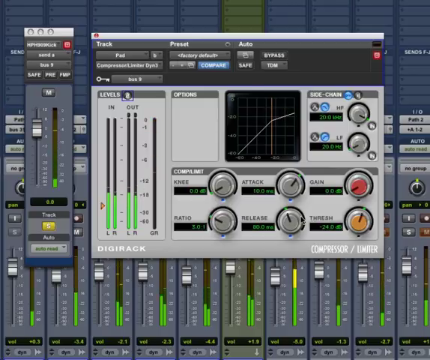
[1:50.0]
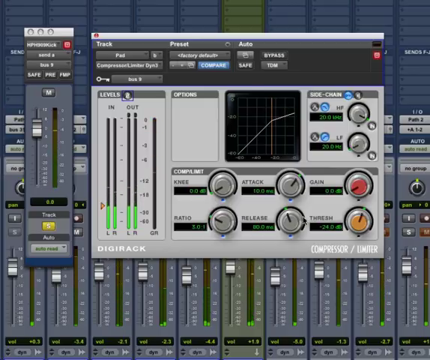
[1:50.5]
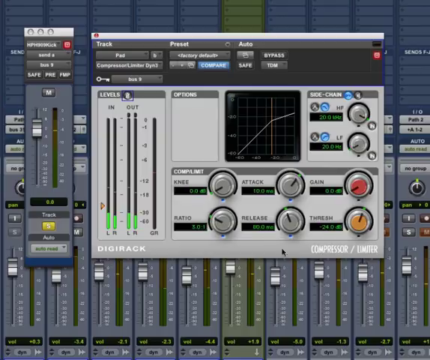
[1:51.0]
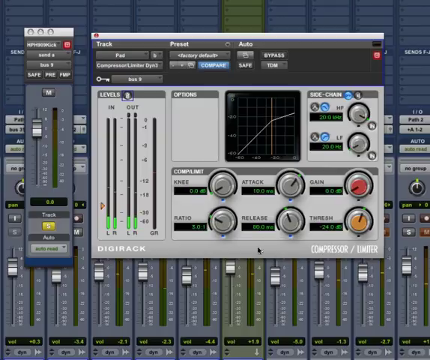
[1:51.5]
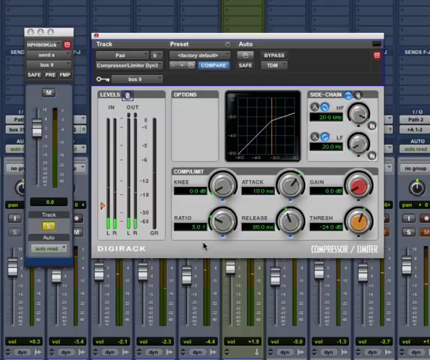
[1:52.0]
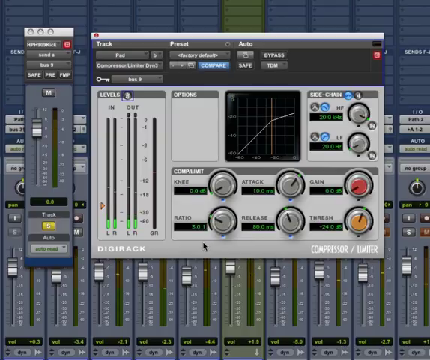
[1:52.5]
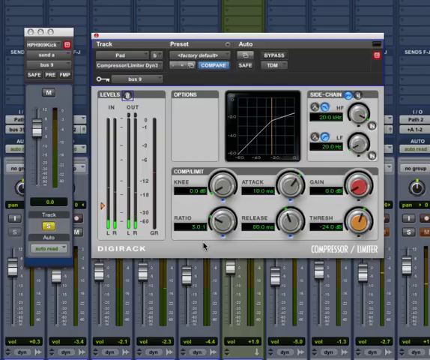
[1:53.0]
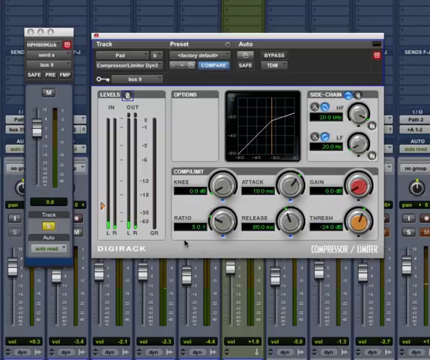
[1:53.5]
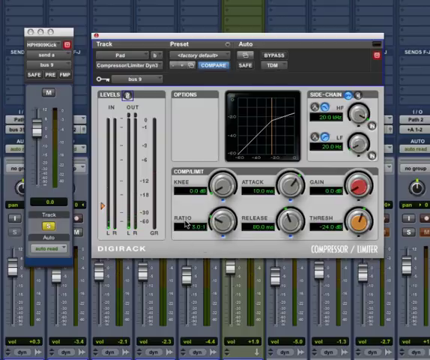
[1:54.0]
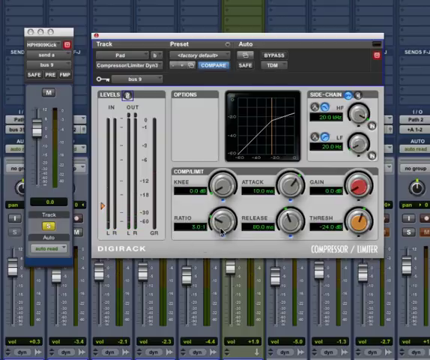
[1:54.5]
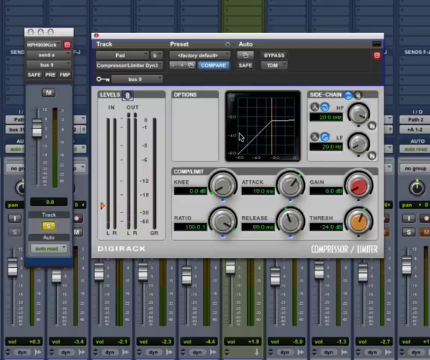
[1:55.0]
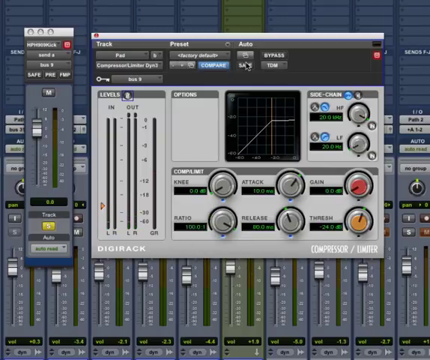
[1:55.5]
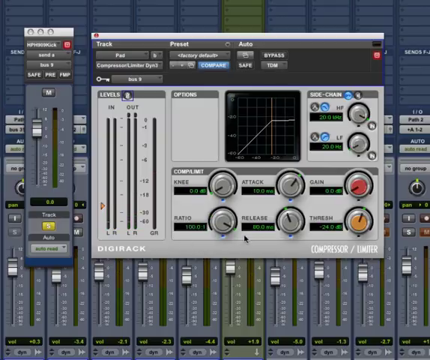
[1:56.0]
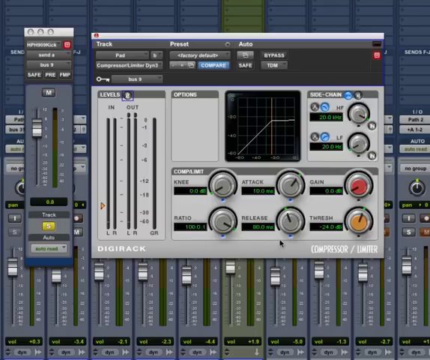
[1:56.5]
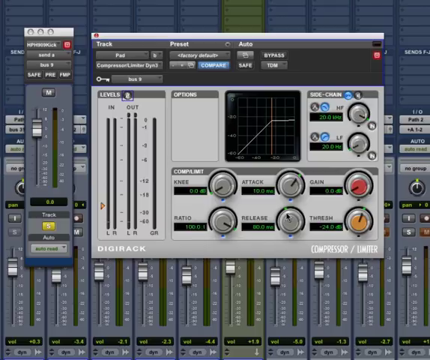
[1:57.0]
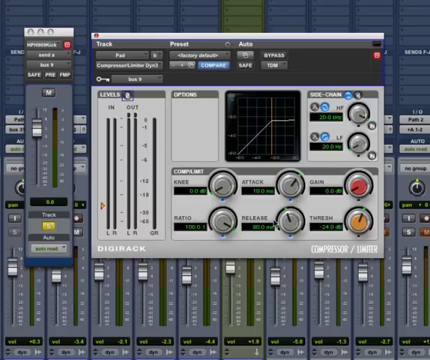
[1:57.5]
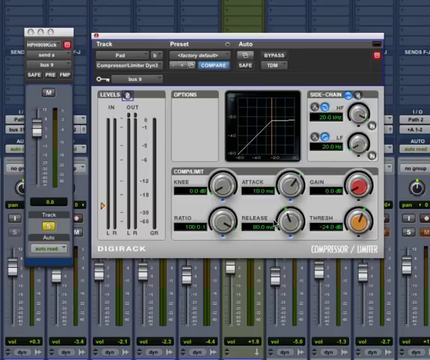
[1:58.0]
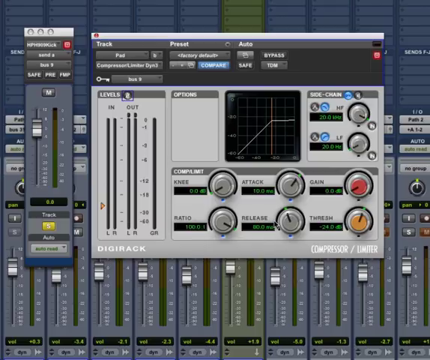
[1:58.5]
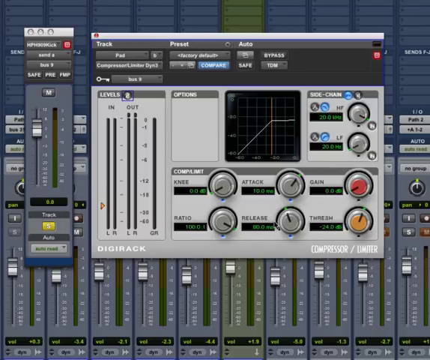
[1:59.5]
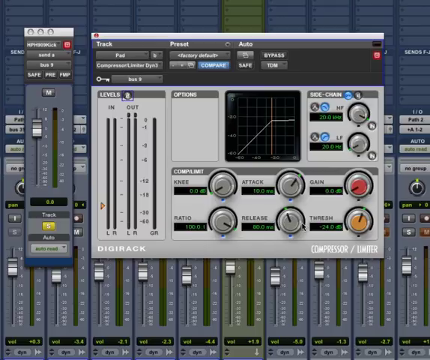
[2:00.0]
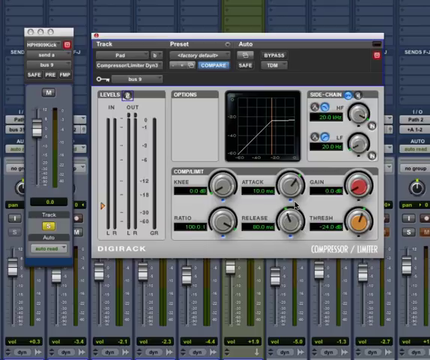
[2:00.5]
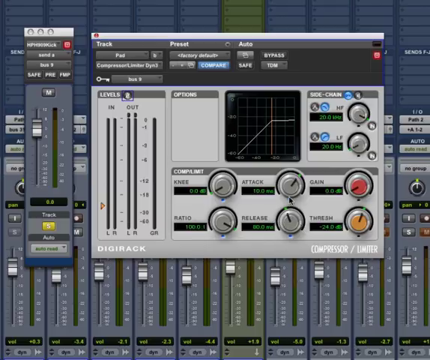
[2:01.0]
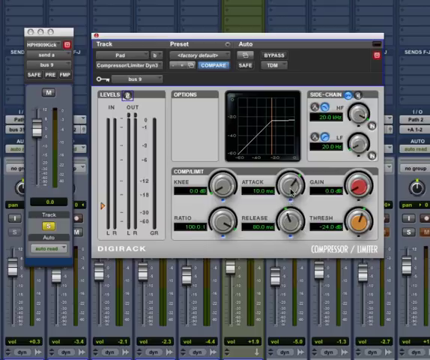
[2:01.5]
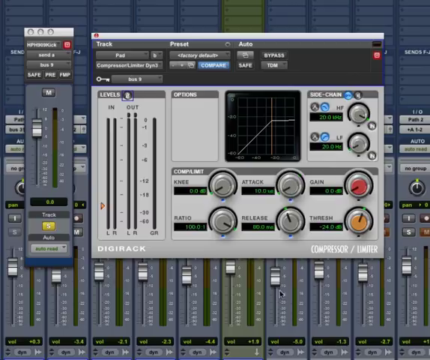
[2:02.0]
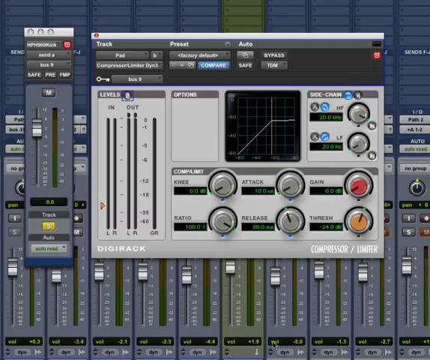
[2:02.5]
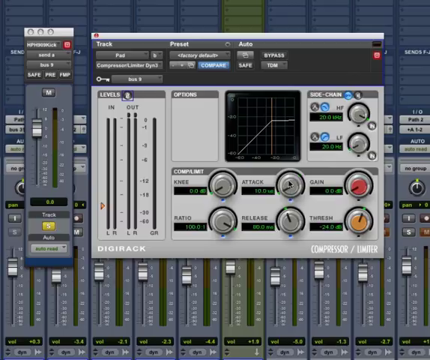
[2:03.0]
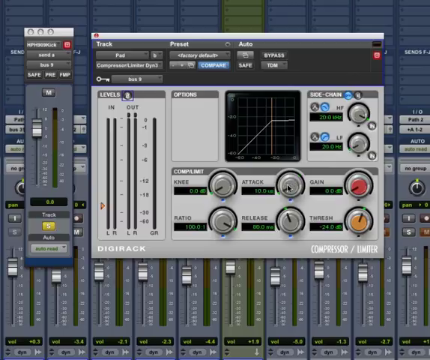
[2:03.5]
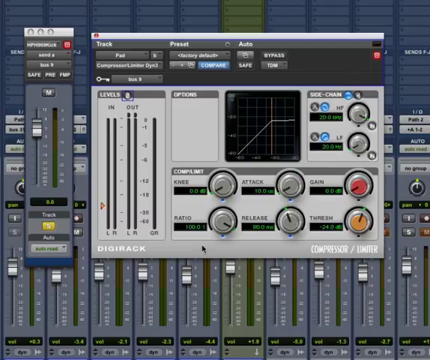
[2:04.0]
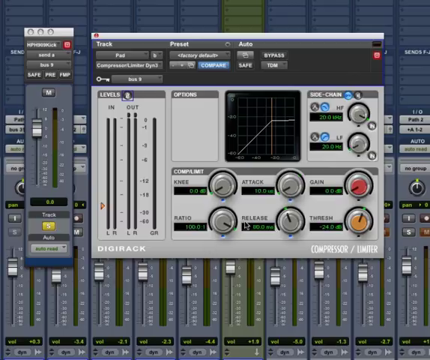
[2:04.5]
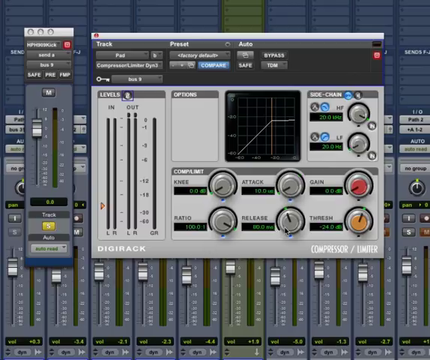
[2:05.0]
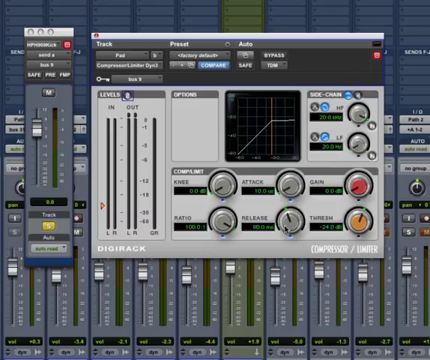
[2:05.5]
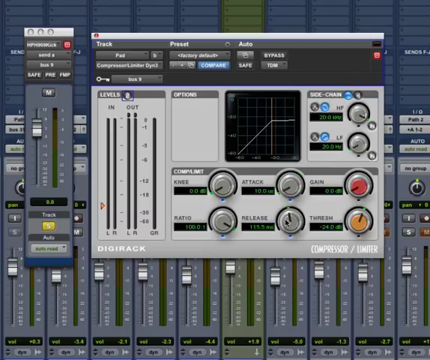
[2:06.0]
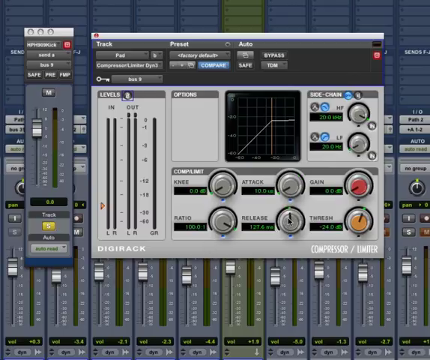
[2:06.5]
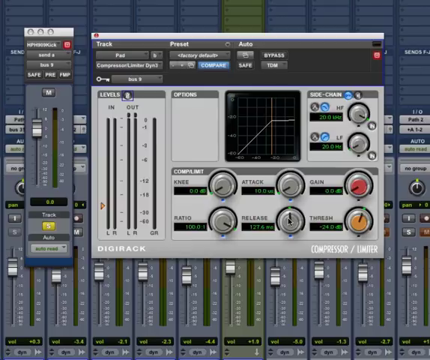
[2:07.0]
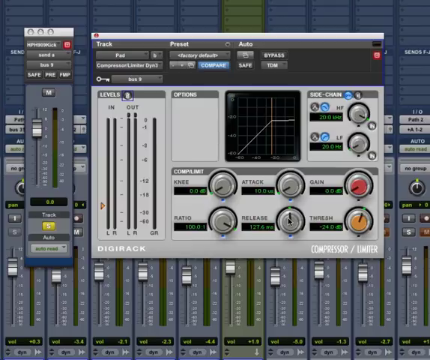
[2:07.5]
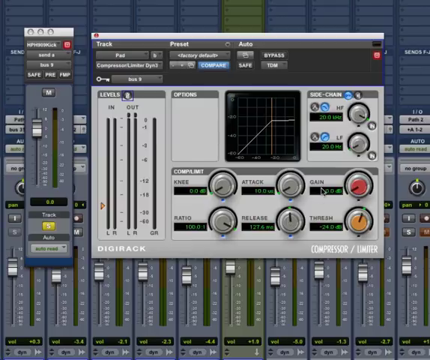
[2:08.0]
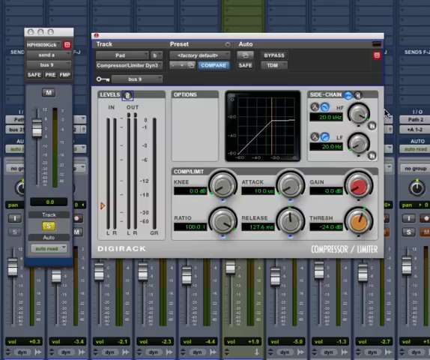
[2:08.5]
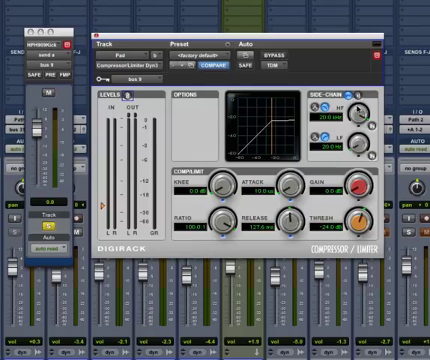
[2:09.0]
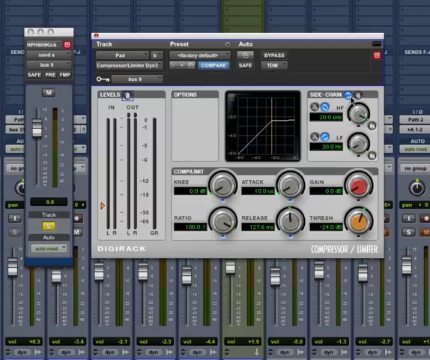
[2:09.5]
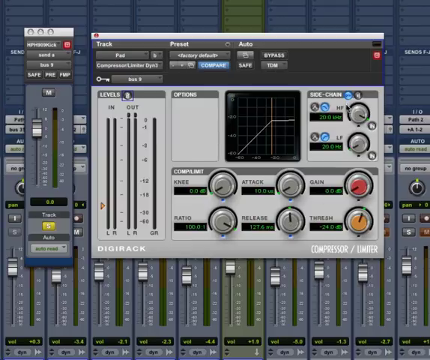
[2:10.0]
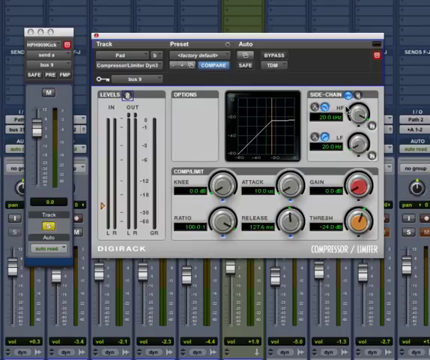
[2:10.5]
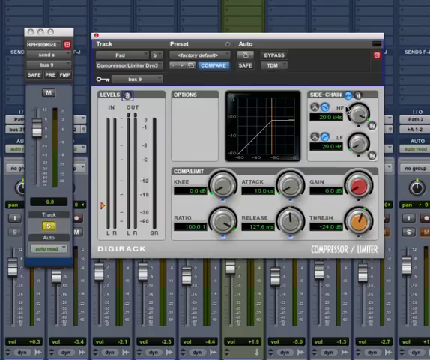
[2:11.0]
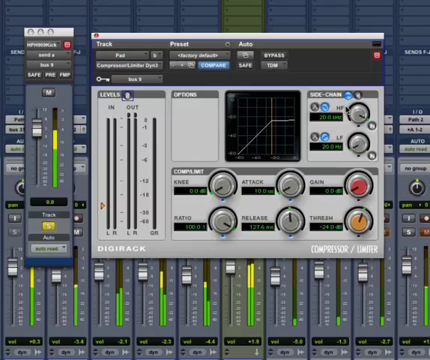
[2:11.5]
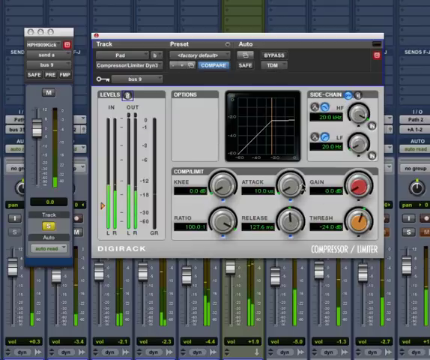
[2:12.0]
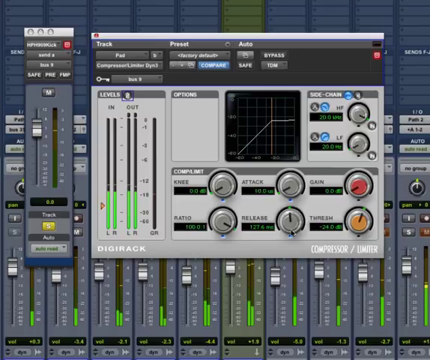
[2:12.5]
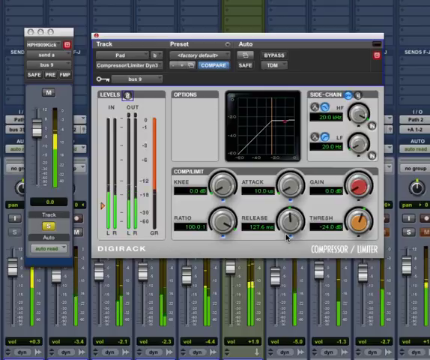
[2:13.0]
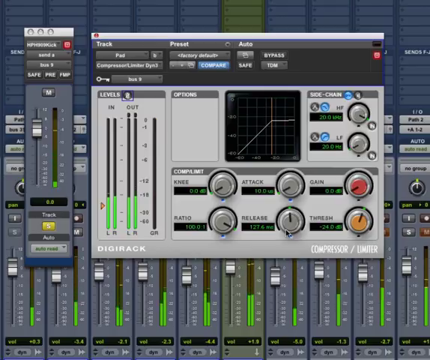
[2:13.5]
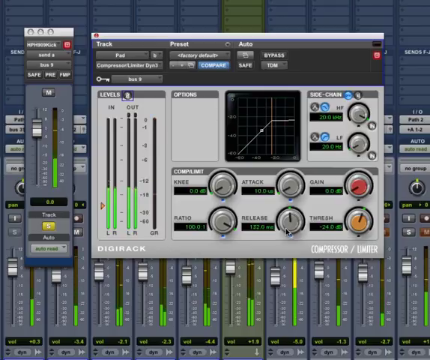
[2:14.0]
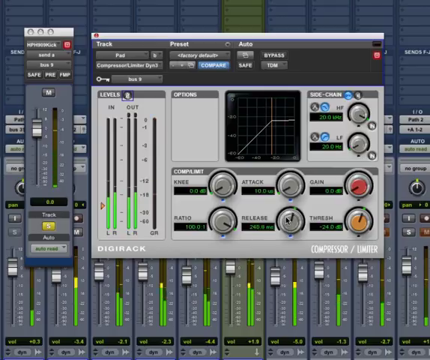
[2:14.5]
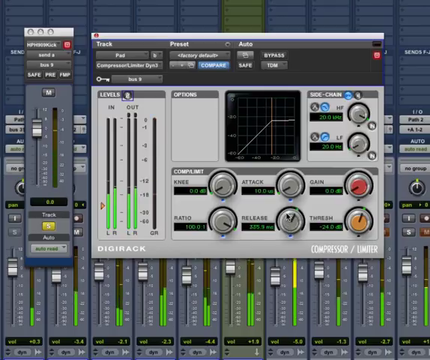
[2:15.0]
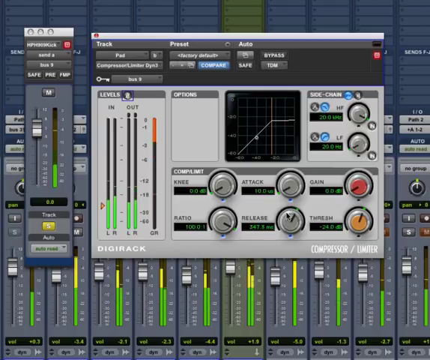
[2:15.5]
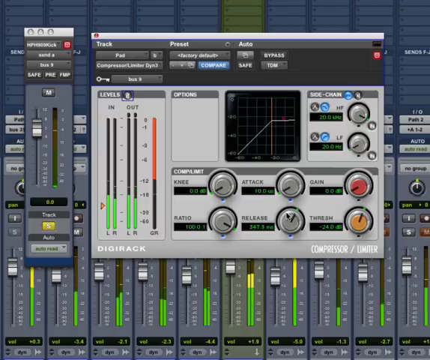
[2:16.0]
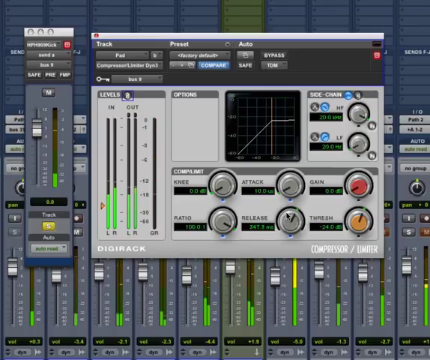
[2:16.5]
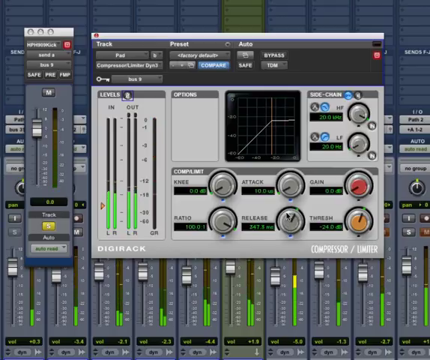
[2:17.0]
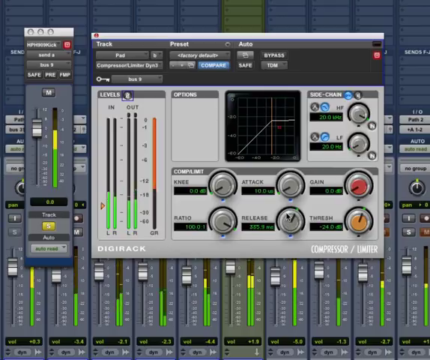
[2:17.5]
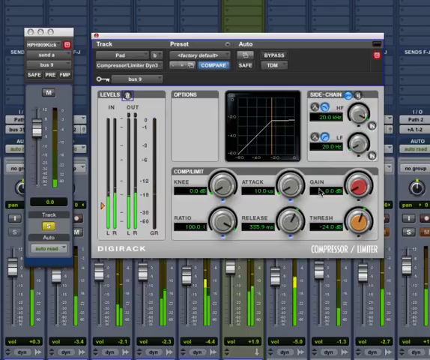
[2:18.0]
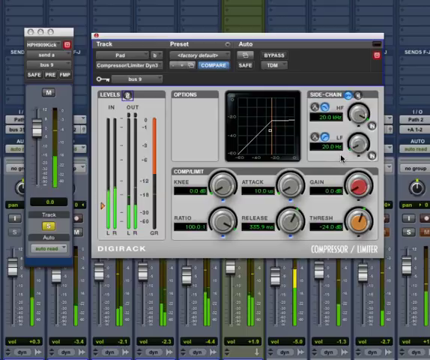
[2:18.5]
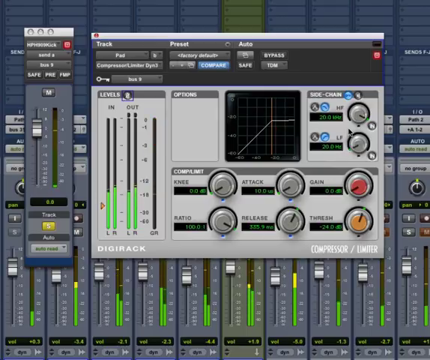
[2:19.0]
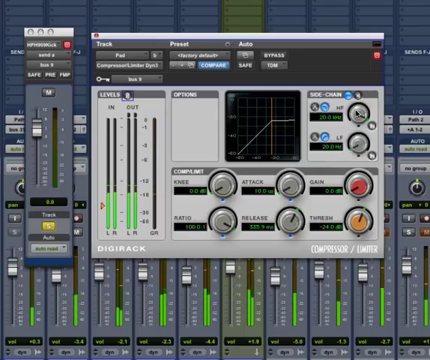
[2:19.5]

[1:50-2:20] The side chain compression in Pro Tools screen shows where the different volumes are displayed; it looks like it is made to play music. There is one green slot, one brown slot, and the rest are blue. The fluorescent green line goes up and down in two separate little sections, beating up, starting with green and going to a little bit of yellow. He clicks on something at the top, and on a gray screen the text reads "EQ," "dynamics," "pitch shift," "delay," "modulation," "harmonic," "noise reduction," "dither," "sound field," "instrument," "effect." To the left it reads "plug-in" four times, then "sends F through J," "compressor," "LD3."